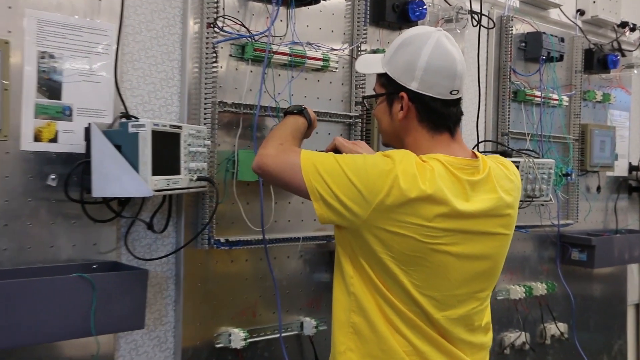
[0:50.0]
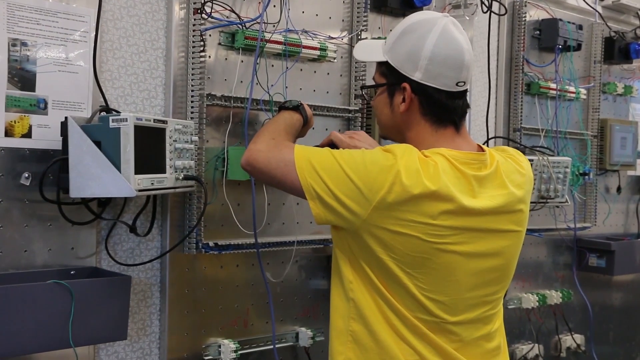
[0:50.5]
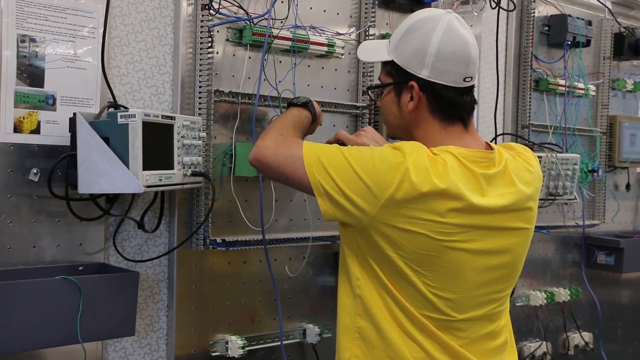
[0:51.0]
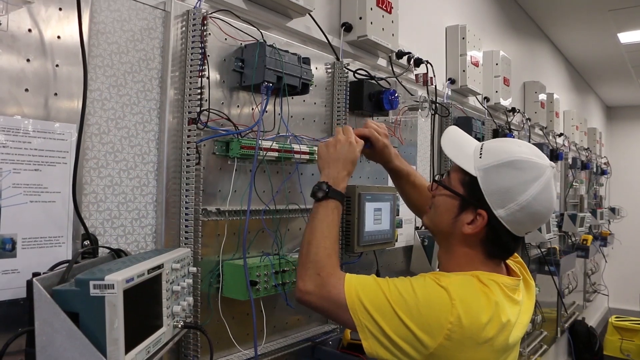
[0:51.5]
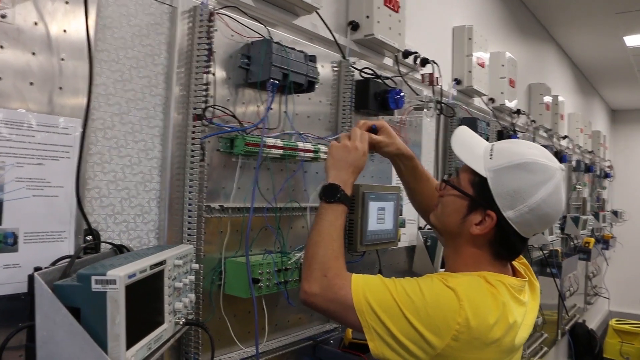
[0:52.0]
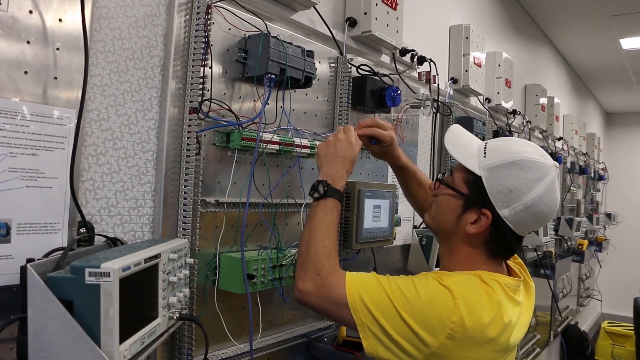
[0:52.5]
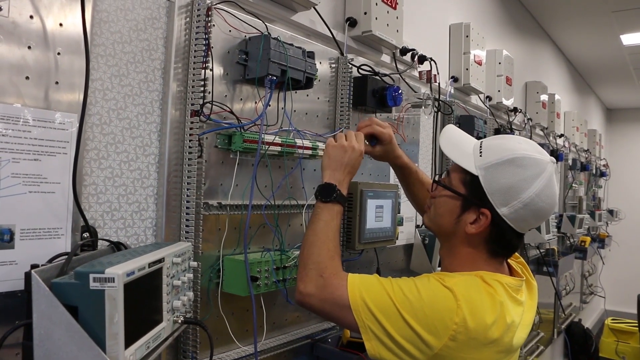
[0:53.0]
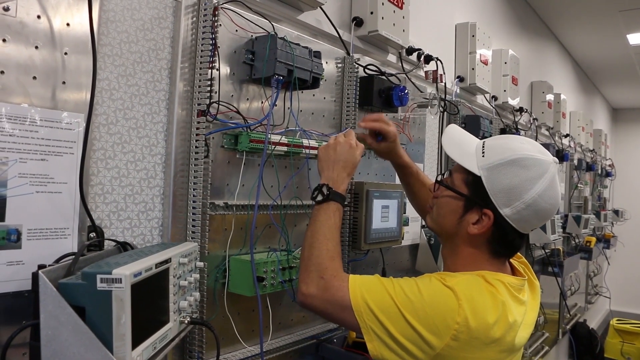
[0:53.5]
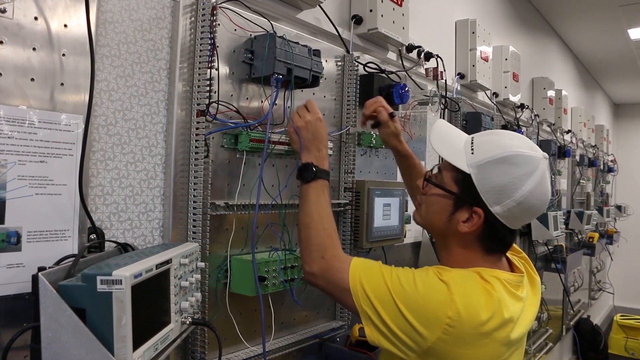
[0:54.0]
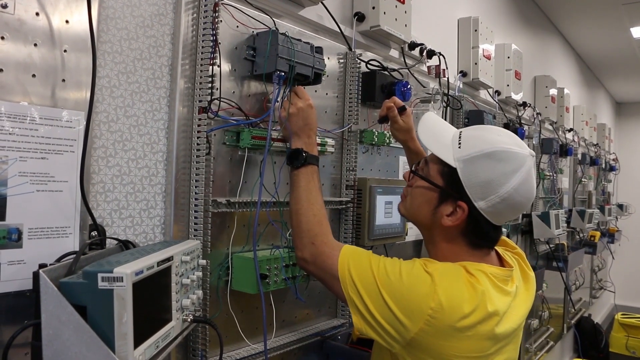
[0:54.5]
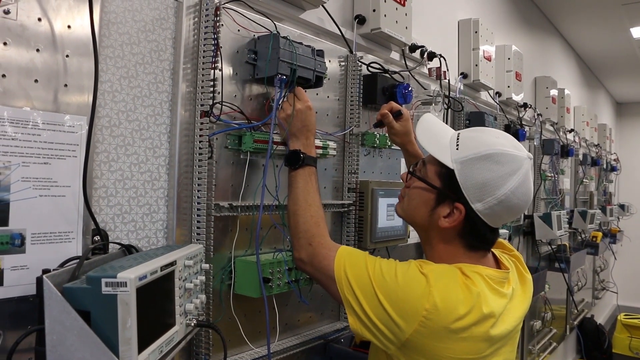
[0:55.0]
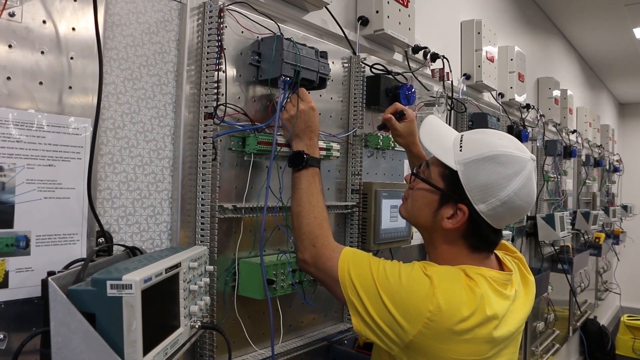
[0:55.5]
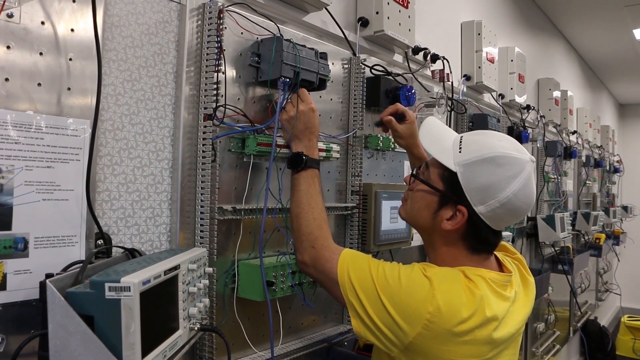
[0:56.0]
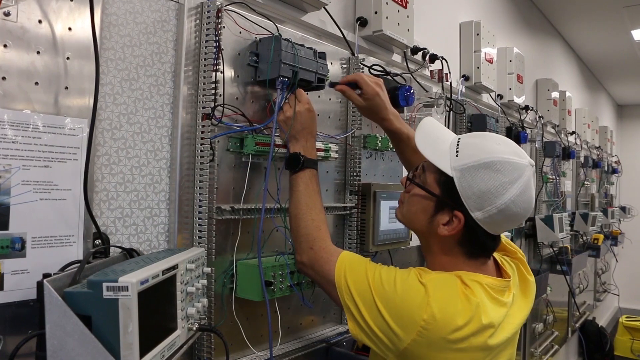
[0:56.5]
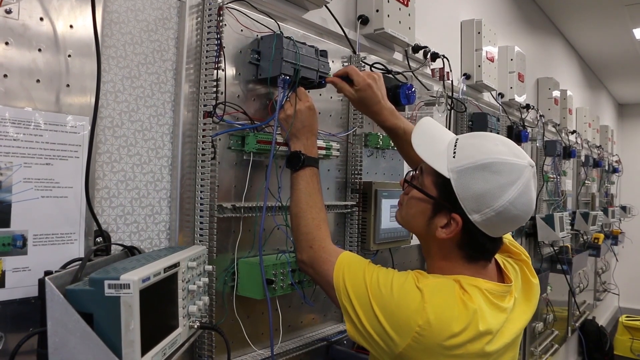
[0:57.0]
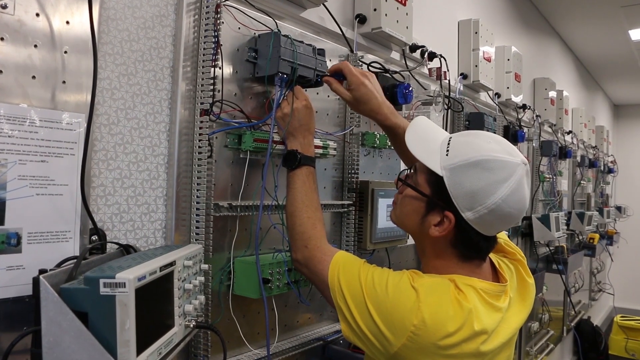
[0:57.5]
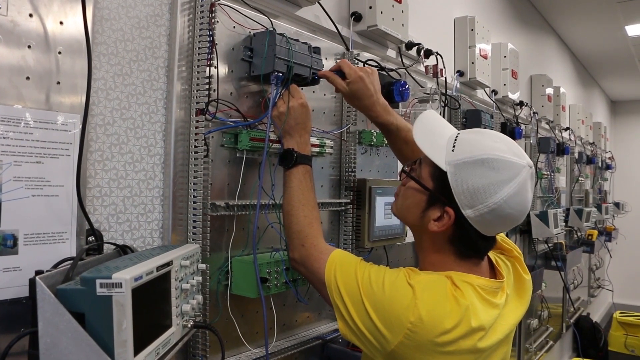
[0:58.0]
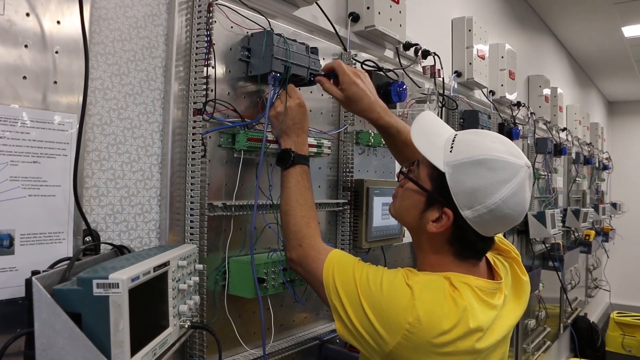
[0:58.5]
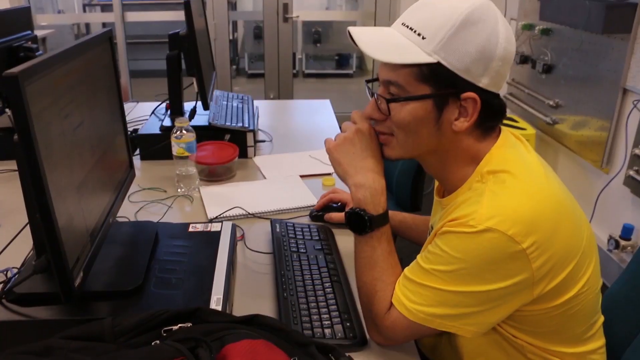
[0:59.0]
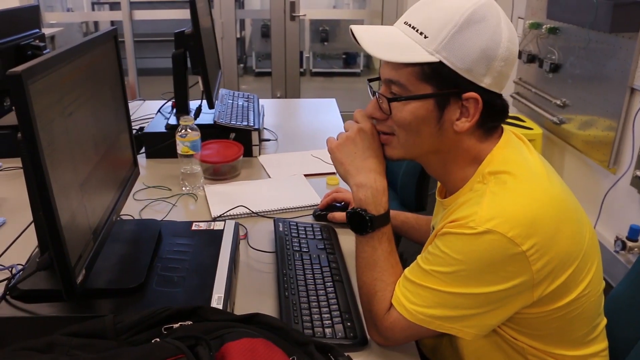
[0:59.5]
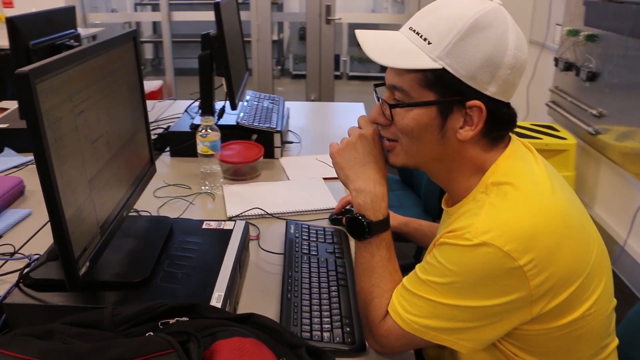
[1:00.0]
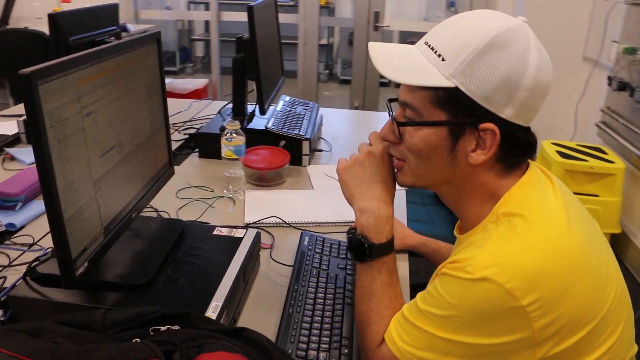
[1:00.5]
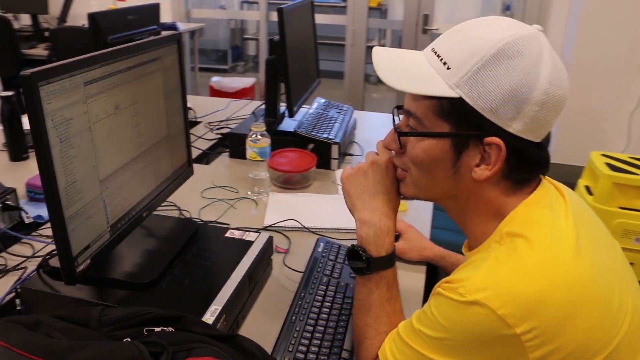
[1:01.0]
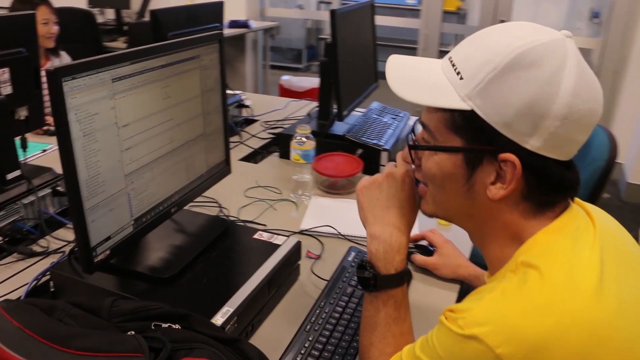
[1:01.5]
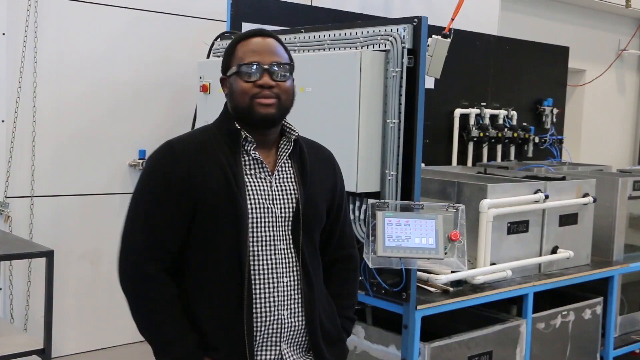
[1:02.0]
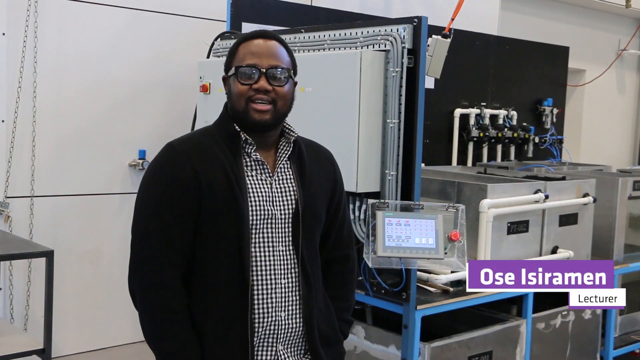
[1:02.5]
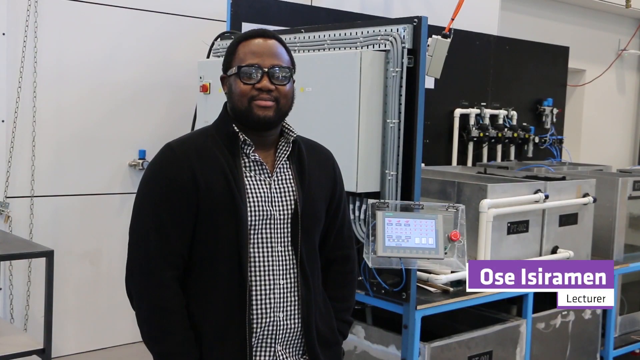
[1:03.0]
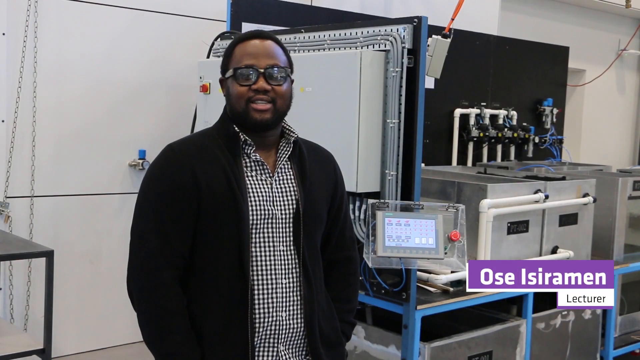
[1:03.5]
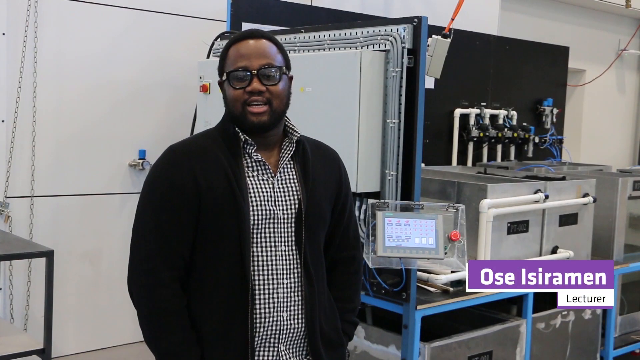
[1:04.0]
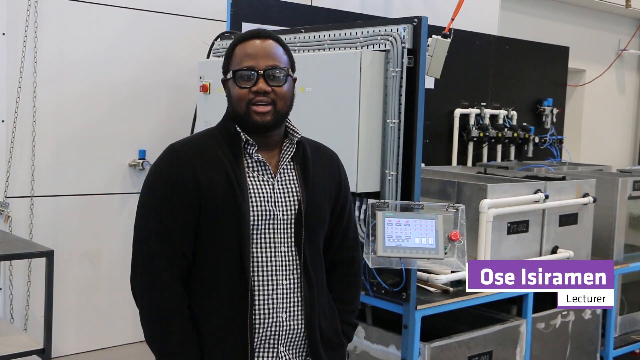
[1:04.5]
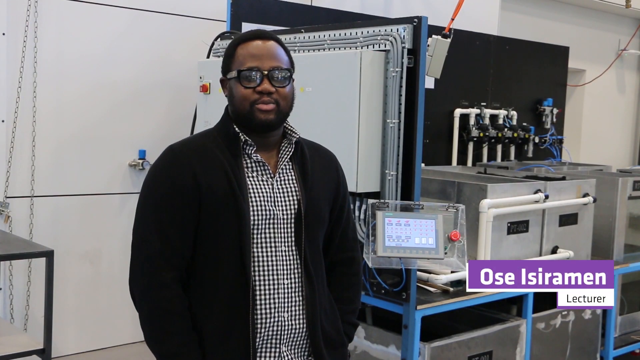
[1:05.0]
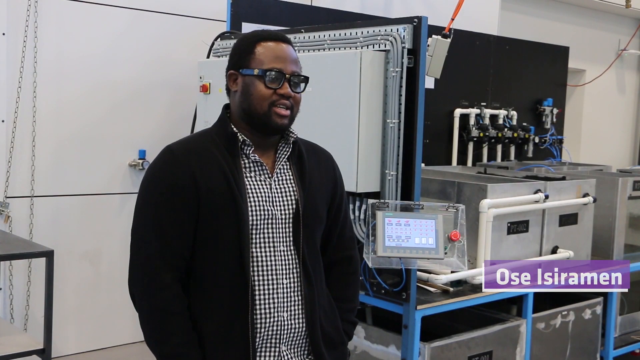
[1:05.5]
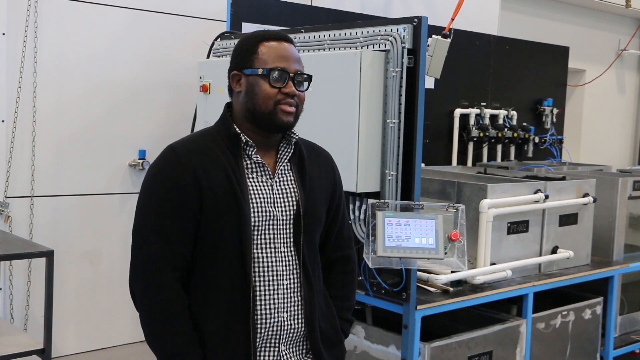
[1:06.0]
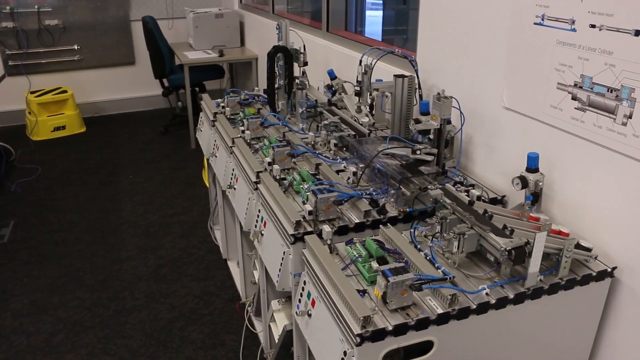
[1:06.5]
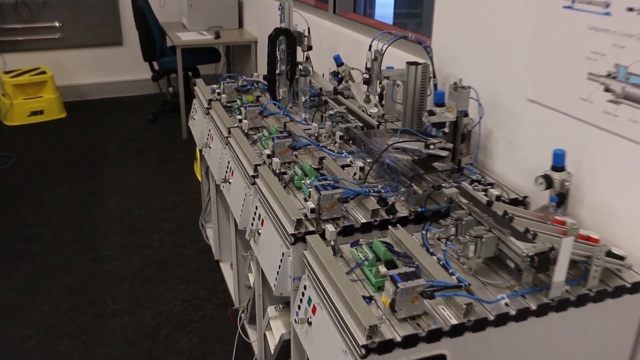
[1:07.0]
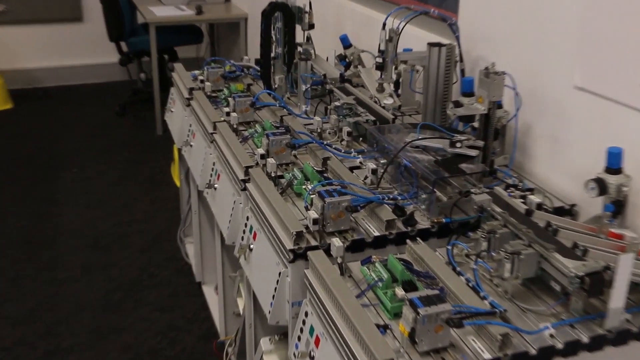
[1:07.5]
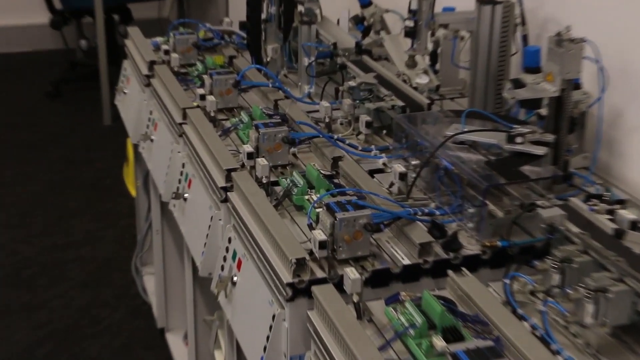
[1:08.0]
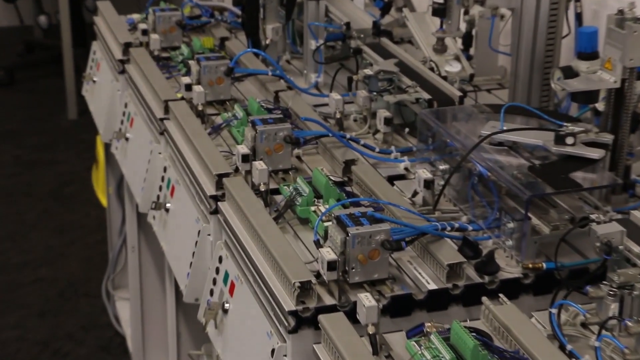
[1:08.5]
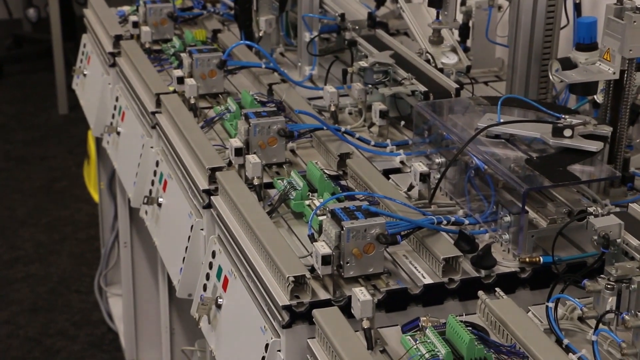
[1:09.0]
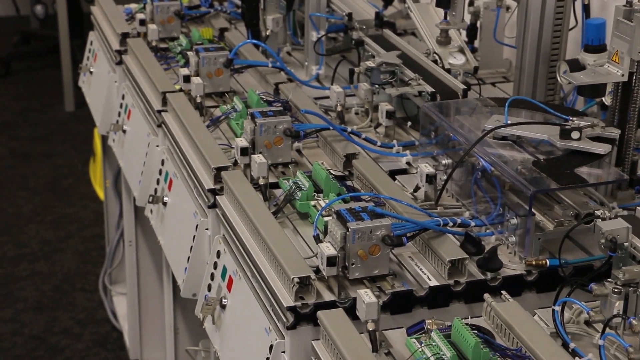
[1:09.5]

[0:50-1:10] The lab is shown, with the man in the yellow T-shirt, white hat, watch and glasses working on boxes and wiring. He then goes and sits at a computer, working on something, with a water and a glass container with a red lid next to him. Across from him to the right, an Oriental woman with longer hair sits at a desktop working on something. The video returns to him working on a box above his head, screwing wiring into it. The camera moves around the lab a couple of times, showing different people. Then the lecturer, named O.C., appears briefly, standing sideways. He has thick, dark hair, a very dark complexion and dark black glasses with big frames, and wears a gray and white plaid button-up shirt with a dark sweater vest over it.